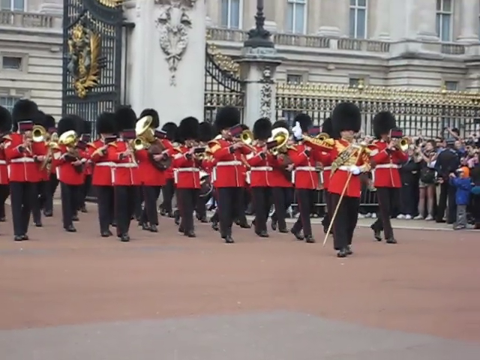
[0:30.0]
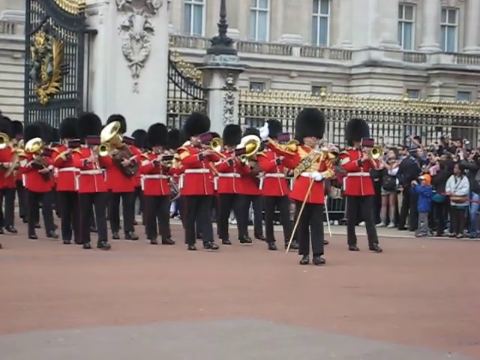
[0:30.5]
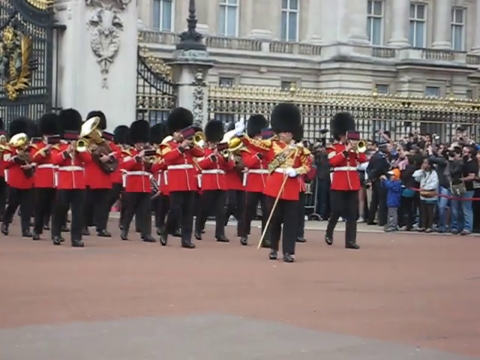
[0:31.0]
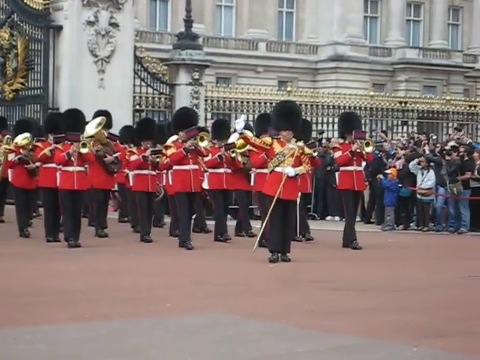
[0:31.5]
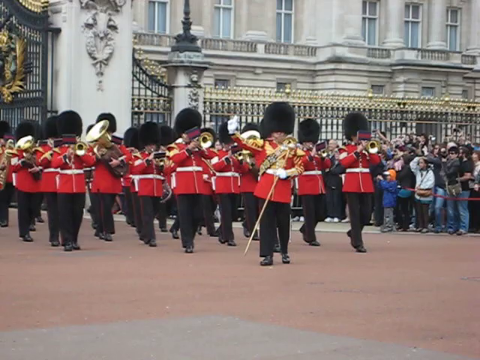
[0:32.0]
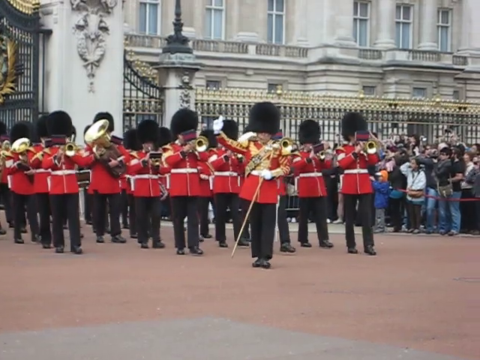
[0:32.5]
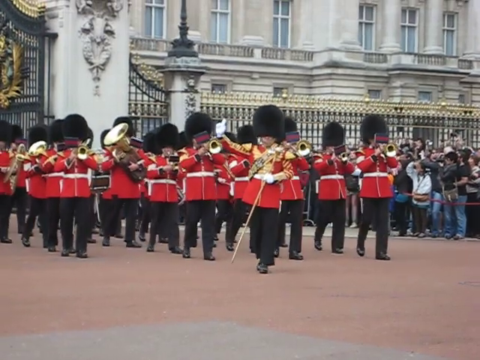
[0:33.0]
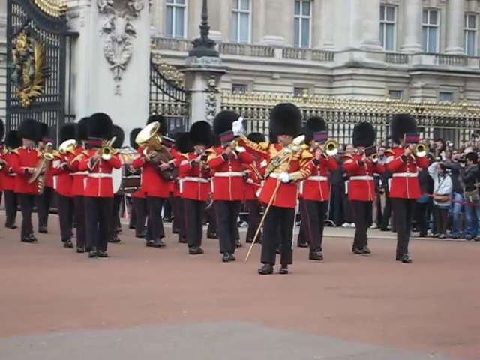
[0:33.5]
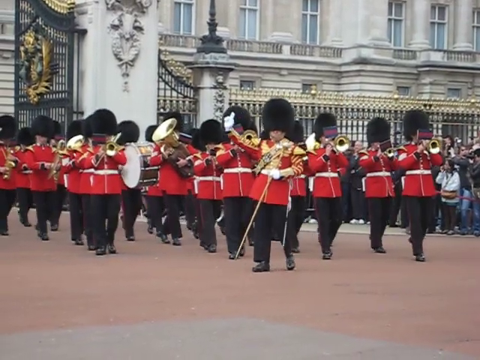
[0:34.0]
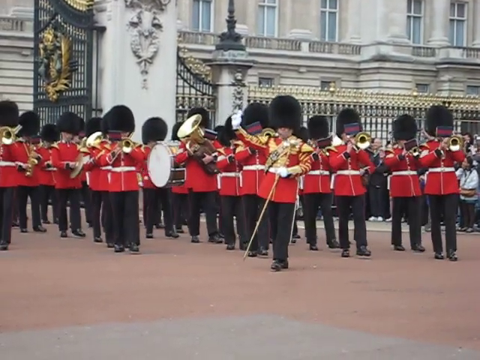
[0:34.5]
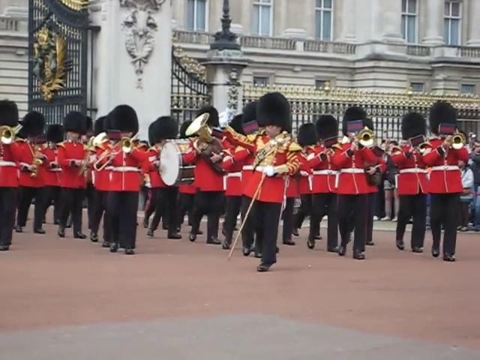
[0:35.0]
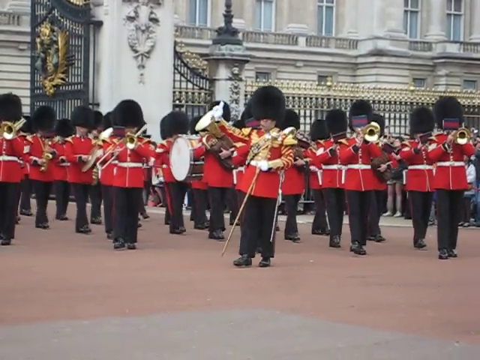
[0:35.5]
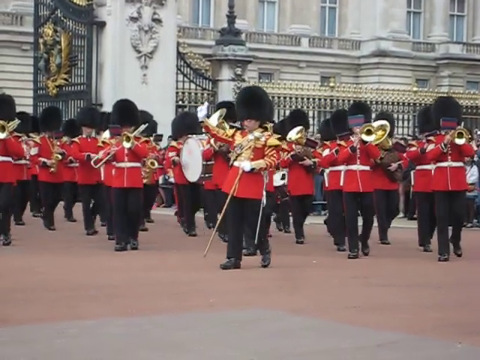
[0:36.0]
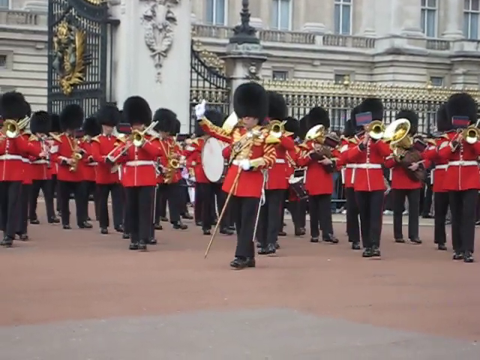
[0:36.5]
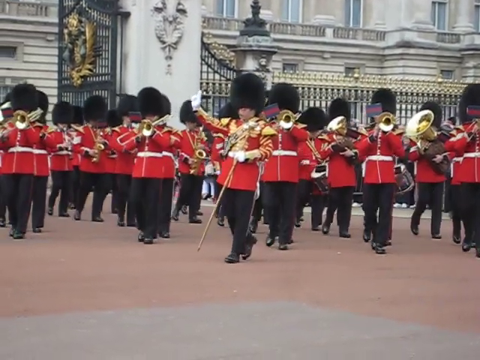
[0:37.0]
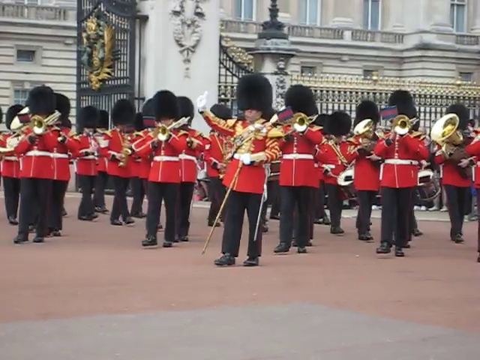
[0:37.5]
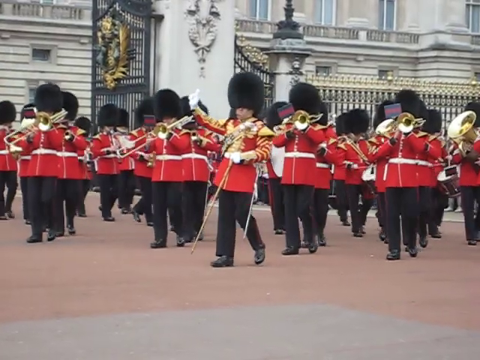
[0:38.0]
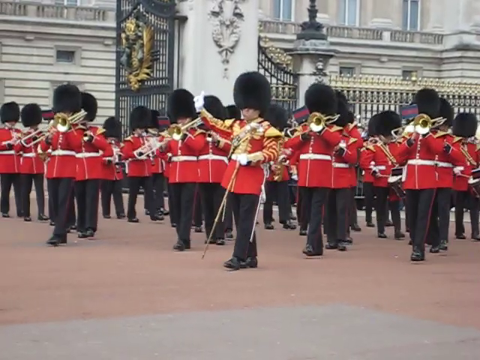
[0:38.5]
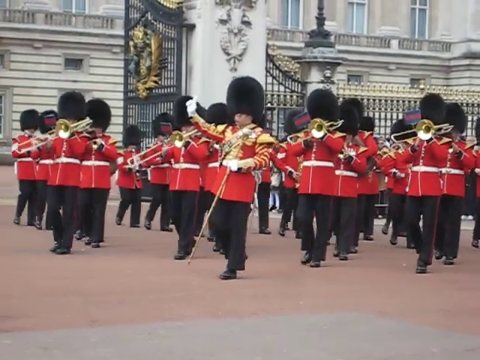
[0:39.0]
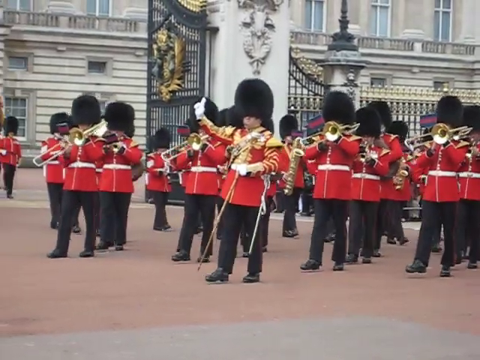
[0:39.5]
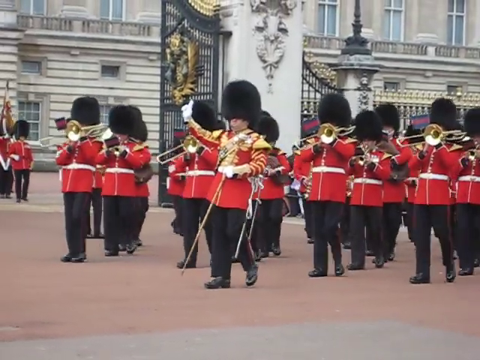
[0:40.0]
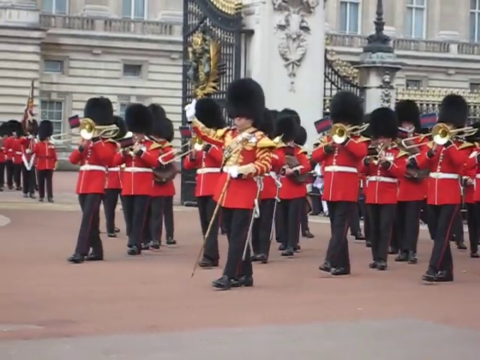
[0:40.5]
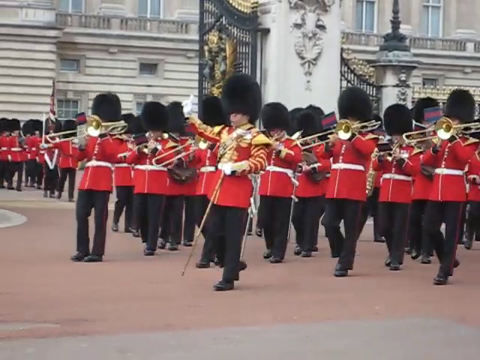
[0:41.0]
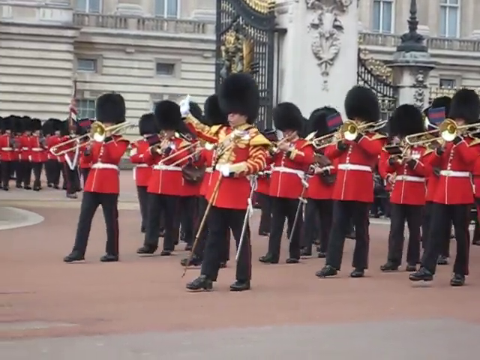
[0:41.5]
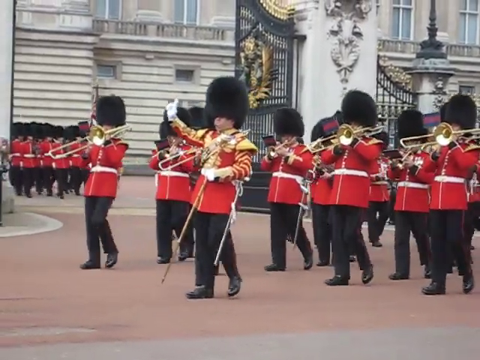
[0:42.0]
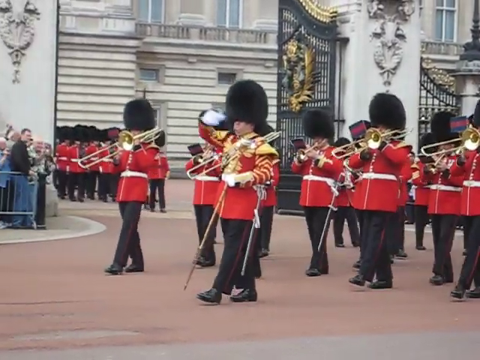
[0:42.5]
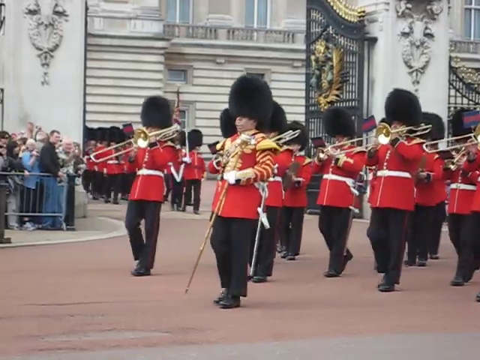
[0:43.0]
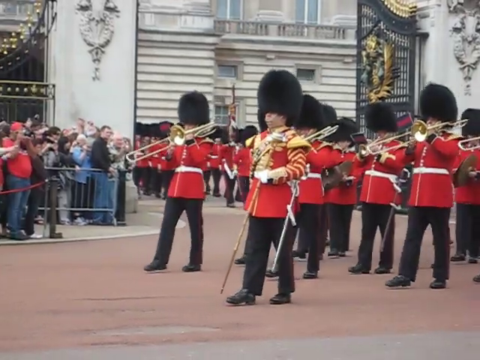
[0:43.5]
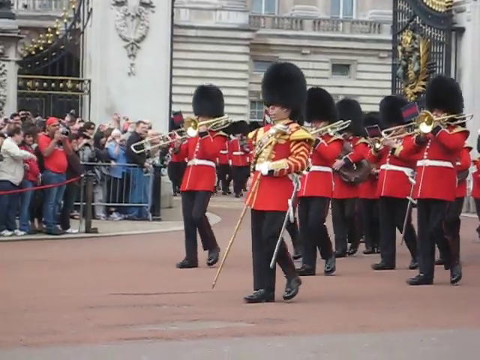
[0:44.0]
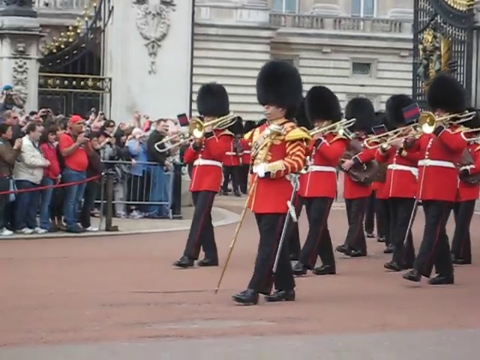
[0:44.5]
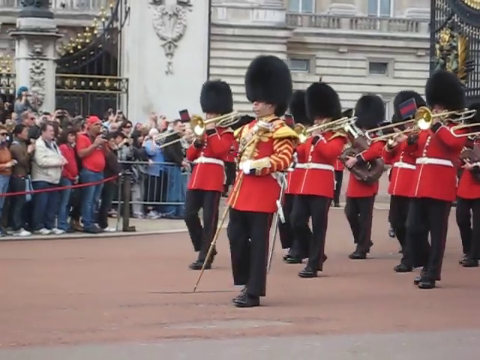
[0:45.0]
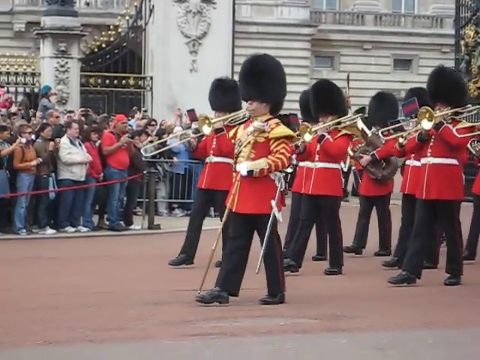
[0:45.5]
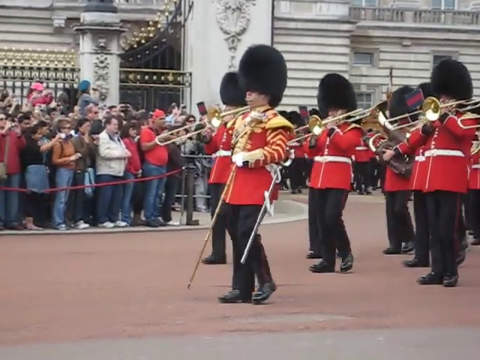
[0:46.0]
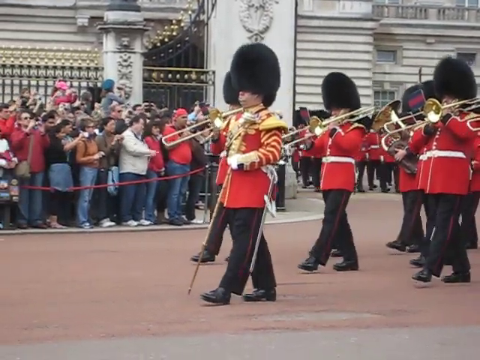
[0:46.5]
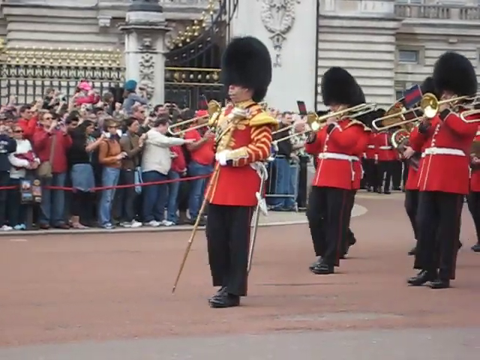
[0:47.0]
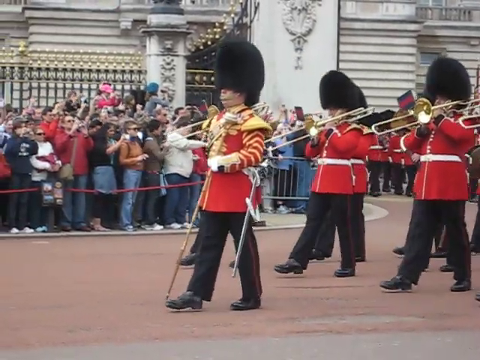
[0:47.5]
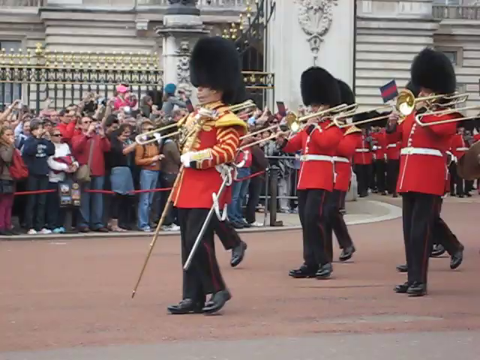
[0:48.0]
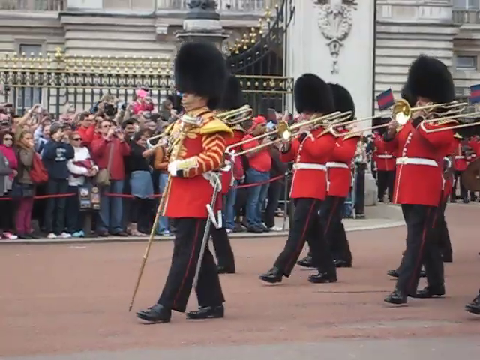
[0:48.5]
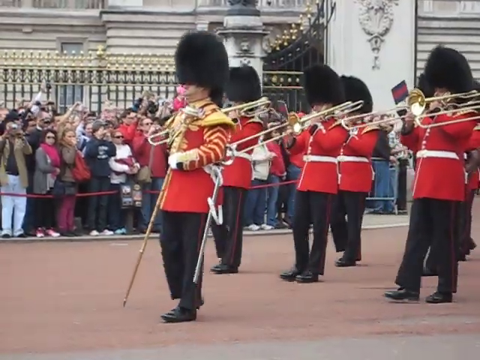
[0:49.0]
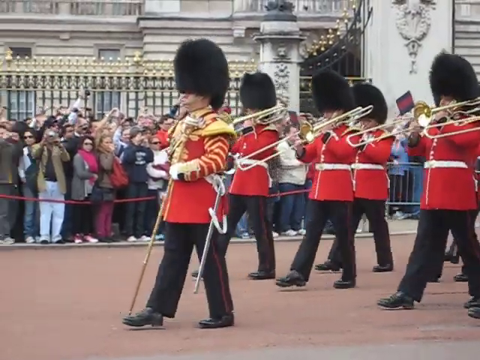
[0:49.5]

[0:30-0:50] The Queen's Guard Marching Band is at Buckingham Palace in London, England, with Buckingham Palace, or a portion of it, in the background. A set of gates is wide open, and the band marches very slowly out of the palace grounds onto the pavement outside the gates. One man leads the band with his arm in the air, and 50 or more other band members follow behind him, each playing an instrument: tubas, a drum, trombones and trumpets can be seen. Every guard member wears the same uniform of a very tall black fur hat, a red blazer, black pants and black boots. Tourists line one side of the road, watching the guards march past.